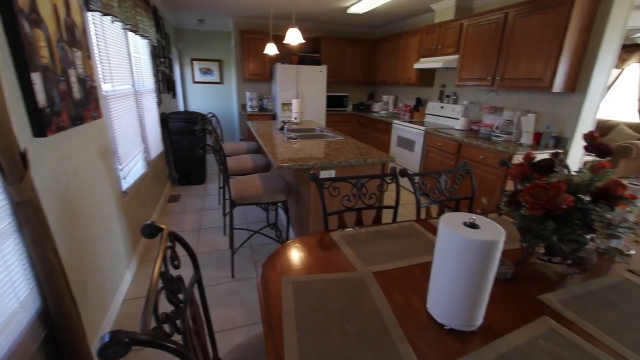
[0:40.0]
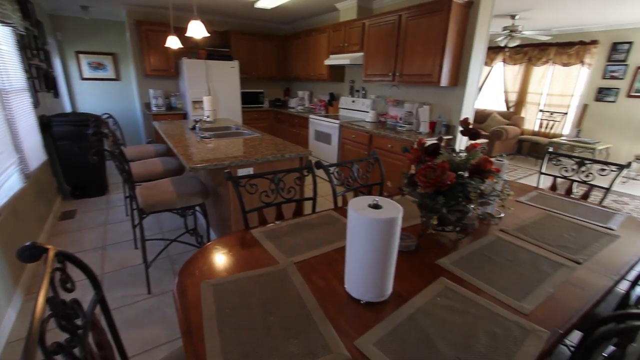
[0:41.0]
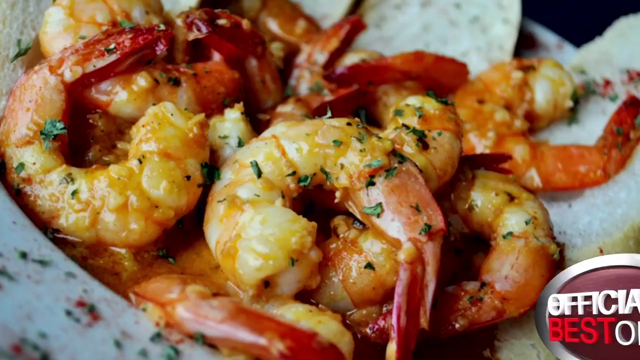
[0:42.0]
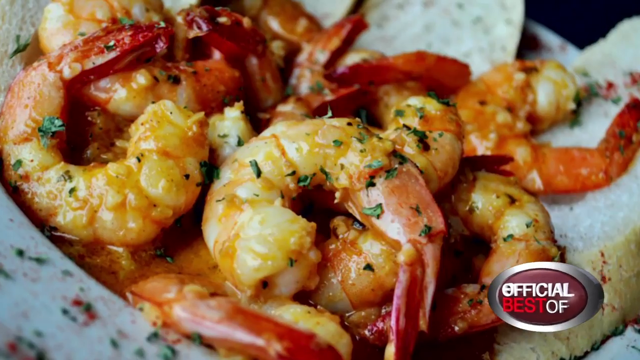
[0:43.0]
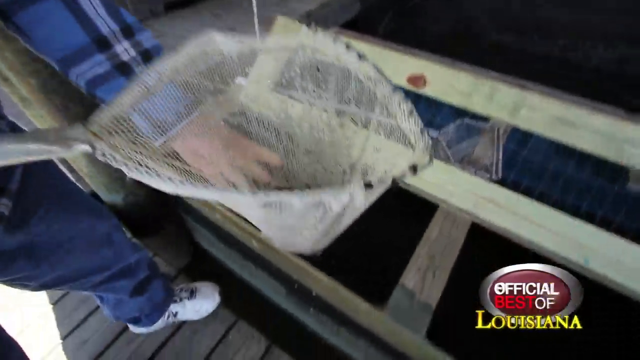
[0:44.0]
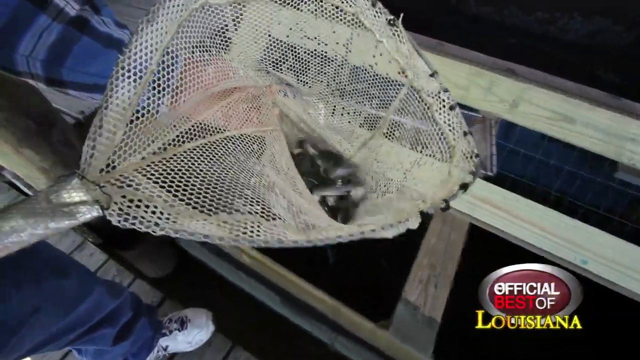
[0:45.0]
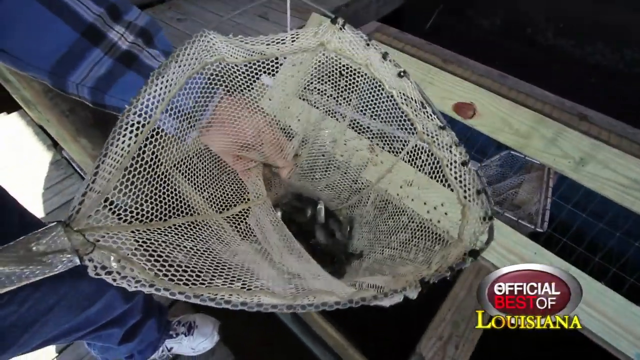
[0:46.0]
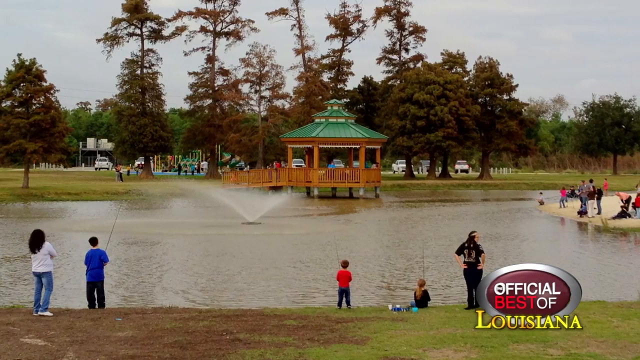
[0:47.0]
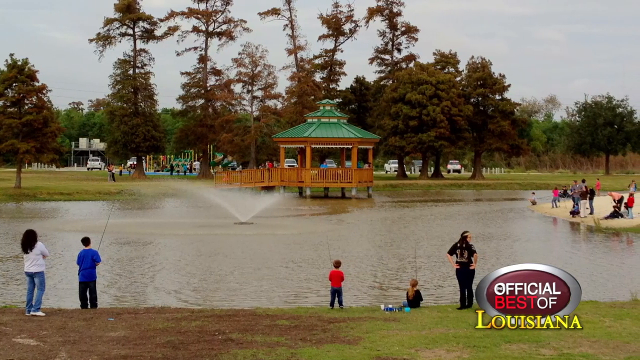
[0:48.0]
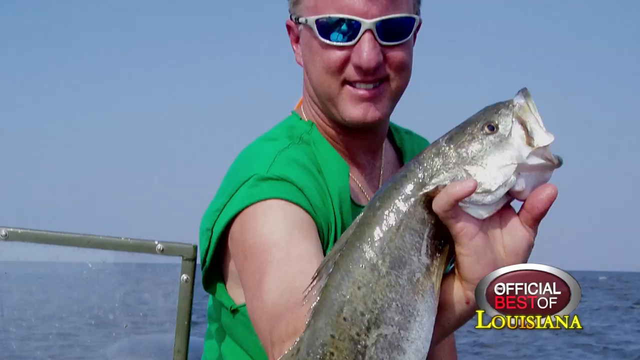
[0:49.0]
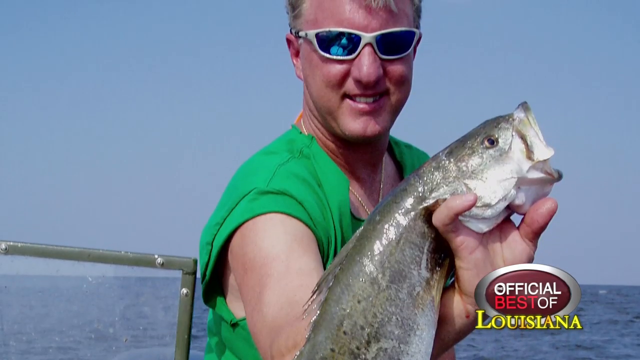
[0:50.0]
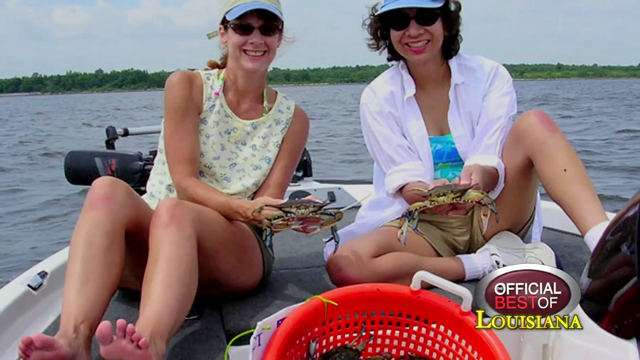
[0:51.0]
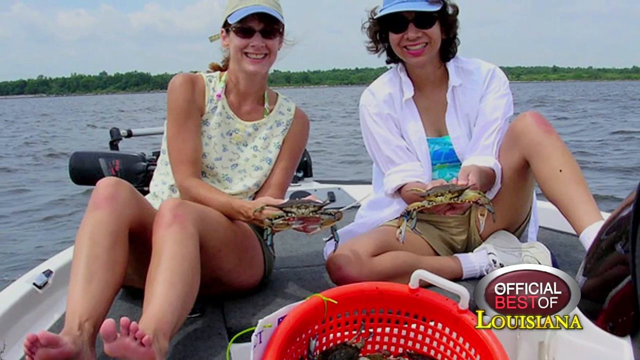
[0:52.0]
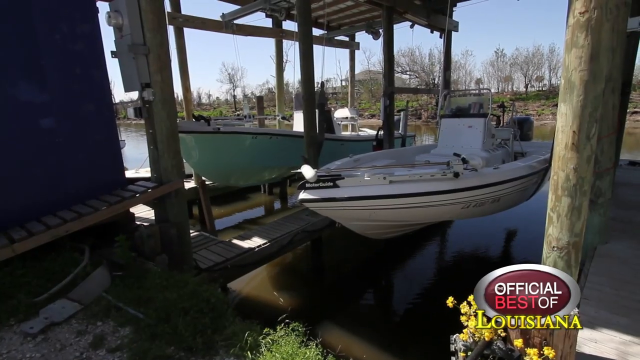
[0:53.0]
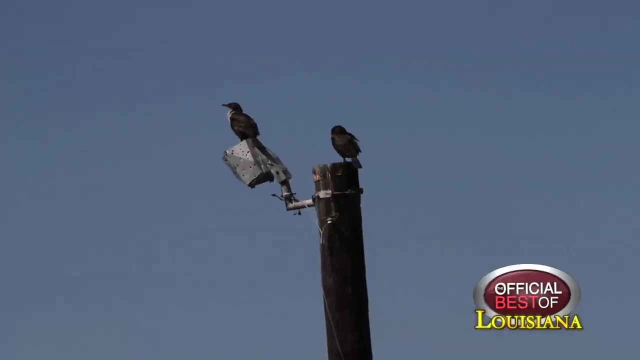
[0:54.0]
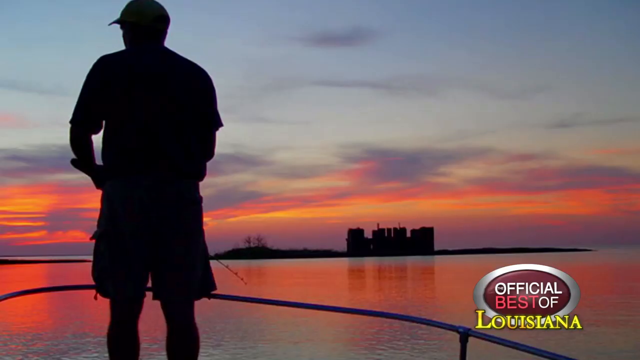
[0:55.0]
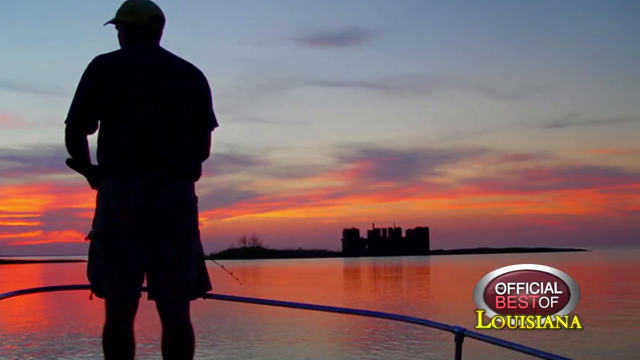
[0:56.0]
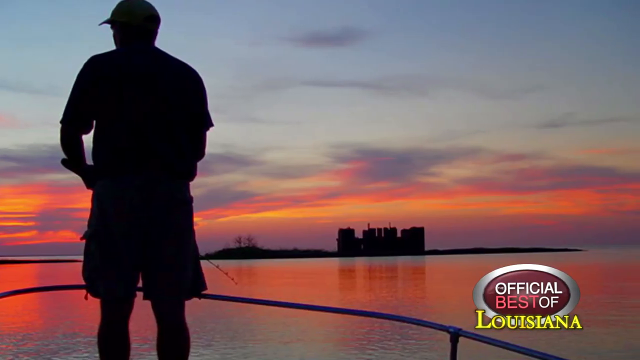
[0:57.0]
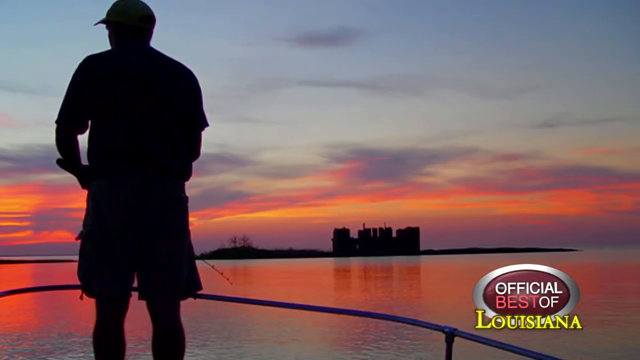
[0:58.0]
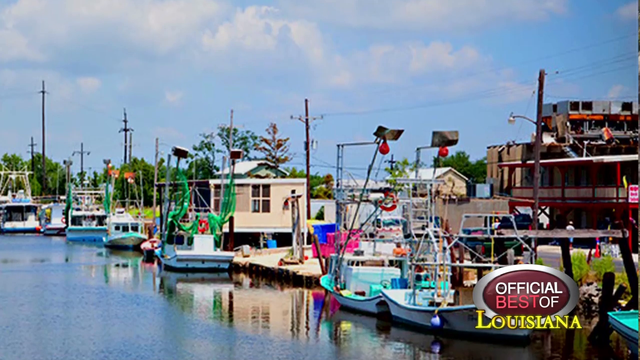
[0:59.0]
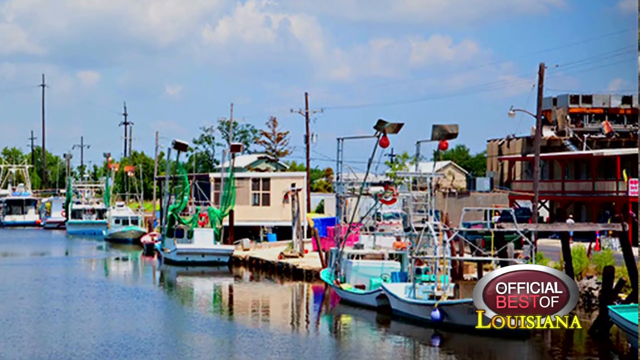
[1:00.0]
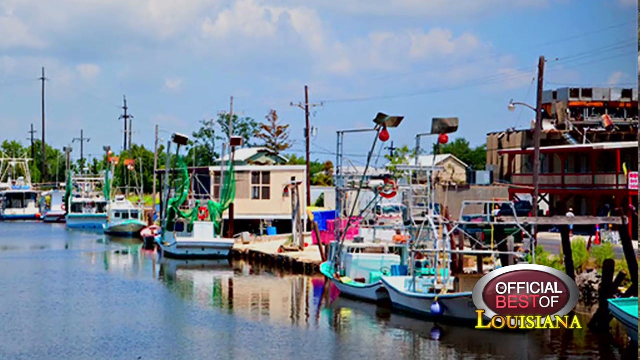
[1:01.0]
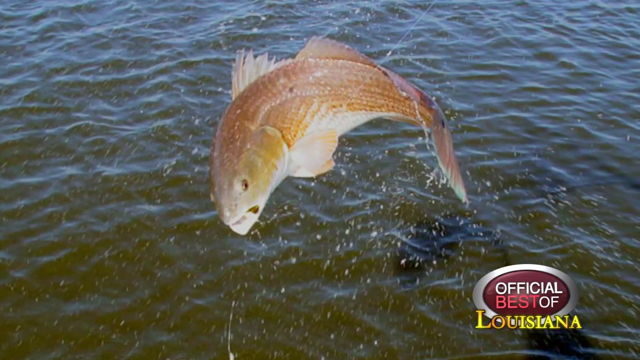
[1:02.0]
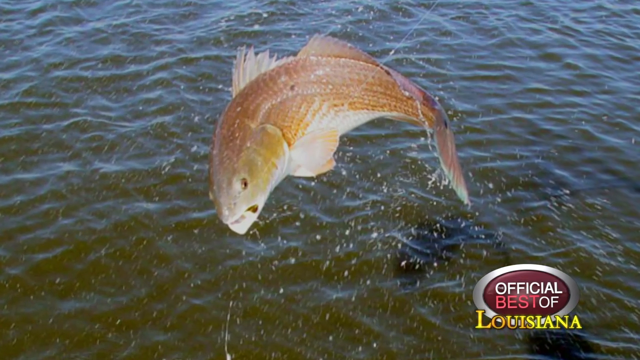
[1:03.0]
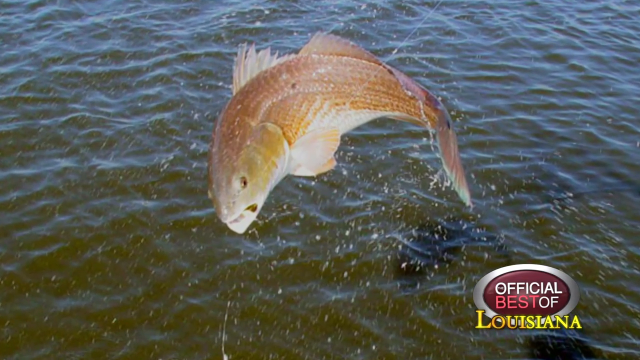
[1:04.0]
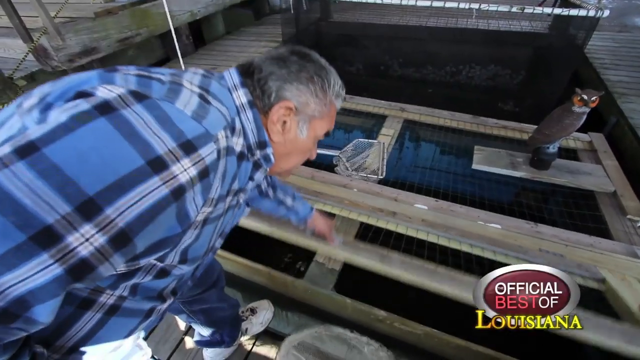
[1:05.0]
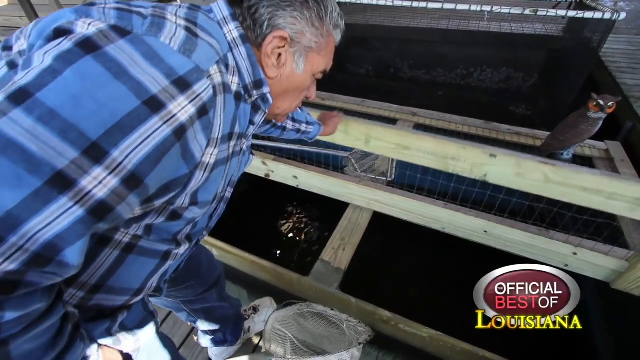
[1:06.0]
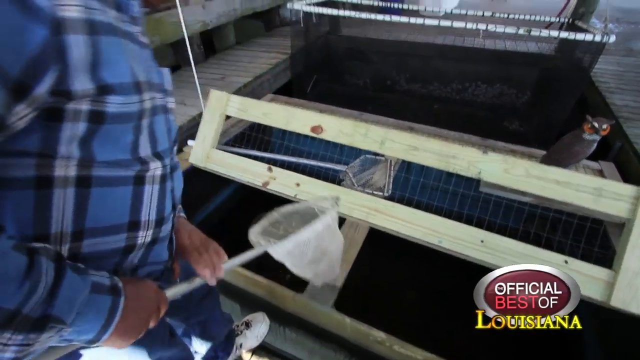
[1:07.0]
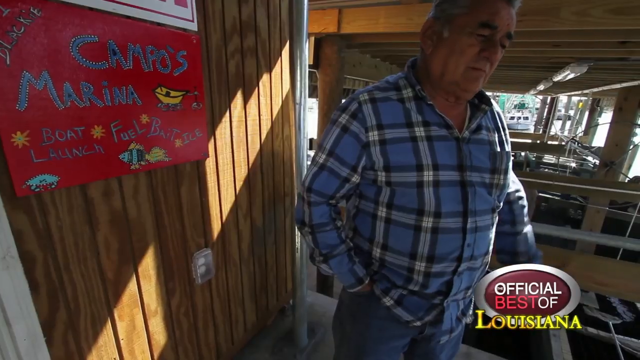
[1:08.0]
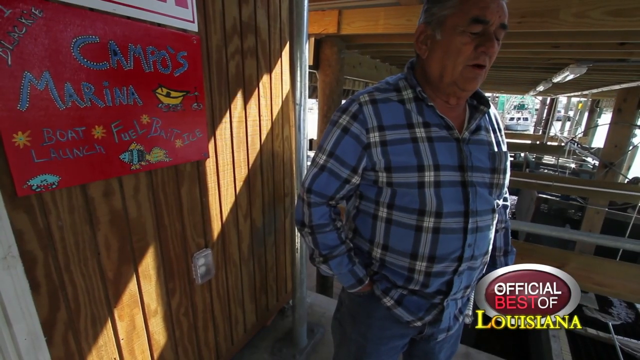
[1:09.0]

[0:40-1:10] Footage shows the inside of one of the houses: the kitchen, with the living room area in the back right corner. The kitchen has a lot of chairs and two tables. The main dining table seems to be at the bottom right, with paper towels and roses in the middle. There is almost a bar-like section right behind the main kitchen area where the stove is. A picture of shrimp follows, then someone lifts up a net with a bunch of dark-colored fish flopping around in it. Next is some sort of festival where a bunch of people are fishing in the same pond, followed by more pictures of people showing their fish and a close-up picture of a fish hopping out of the water.